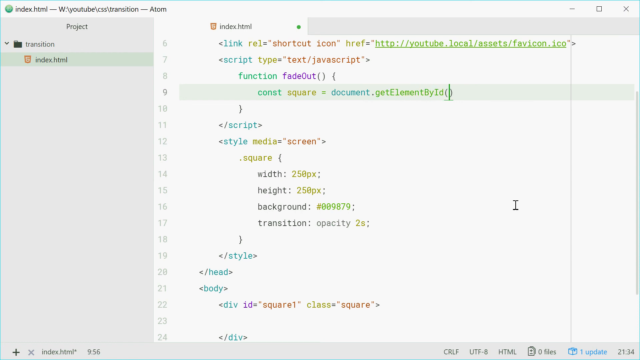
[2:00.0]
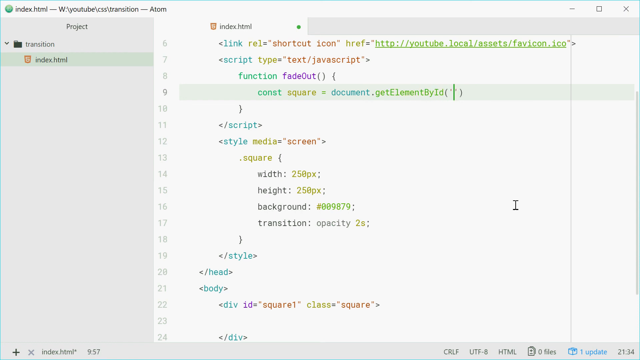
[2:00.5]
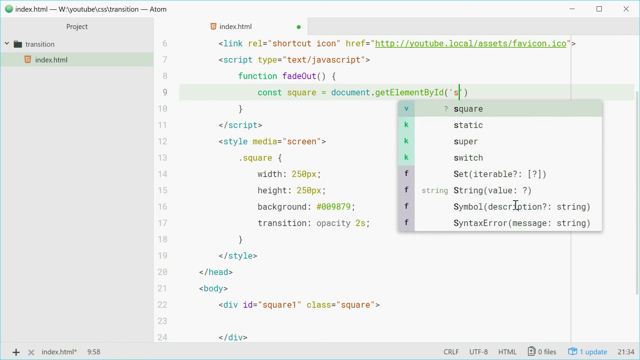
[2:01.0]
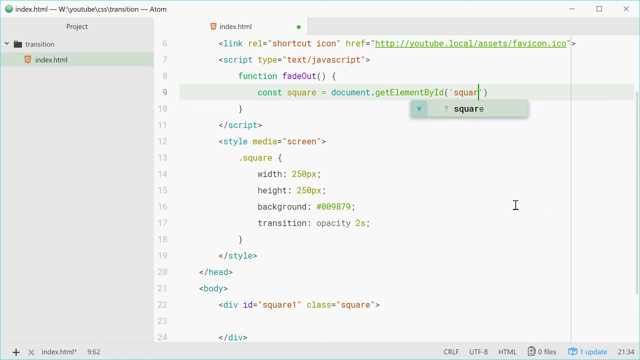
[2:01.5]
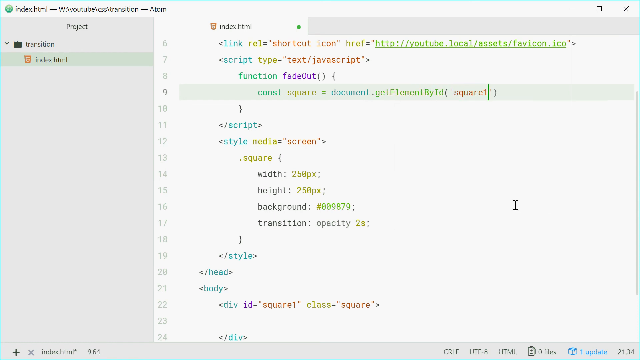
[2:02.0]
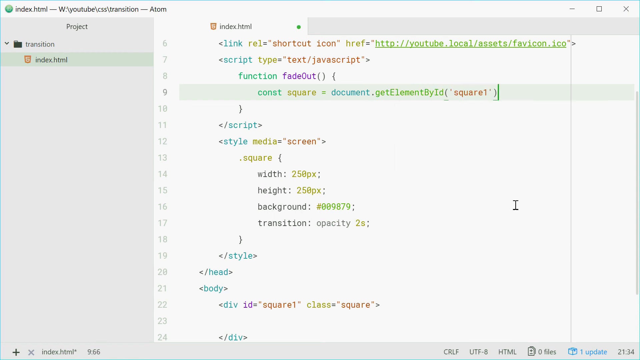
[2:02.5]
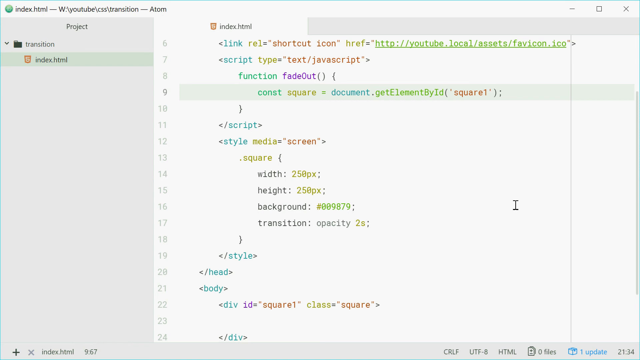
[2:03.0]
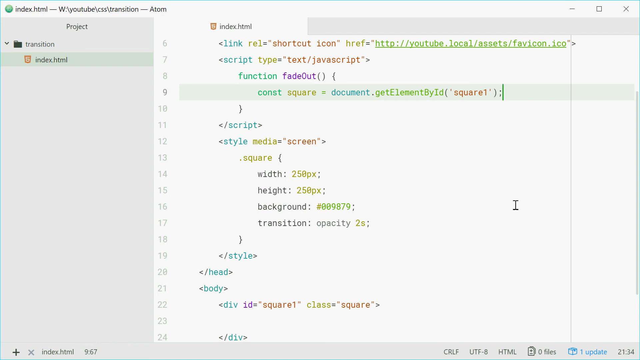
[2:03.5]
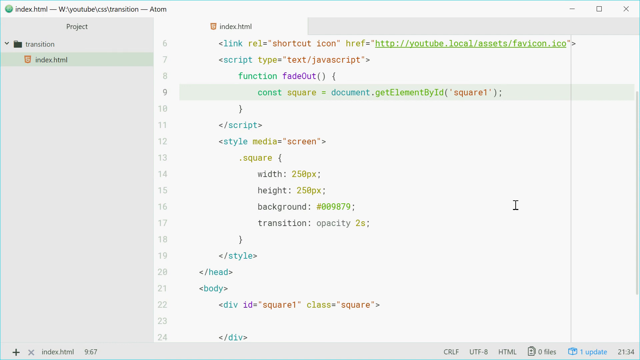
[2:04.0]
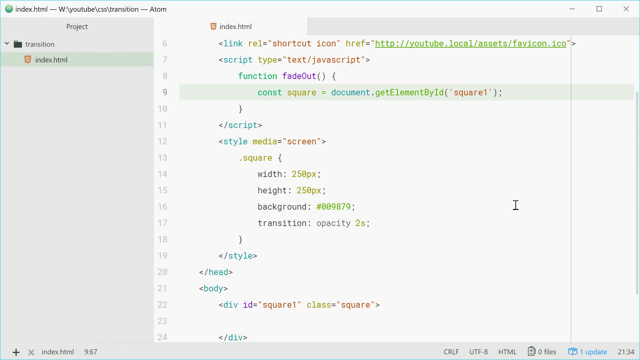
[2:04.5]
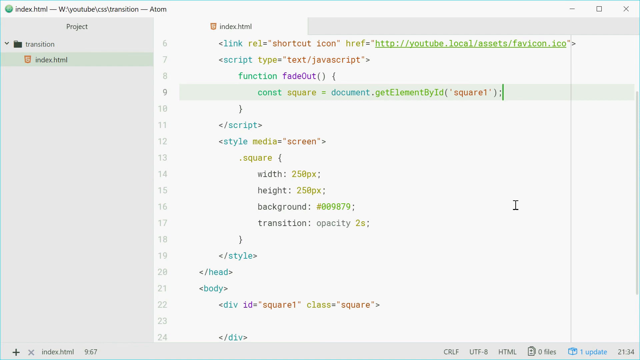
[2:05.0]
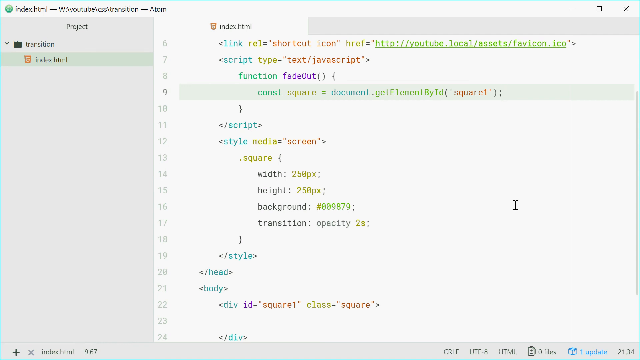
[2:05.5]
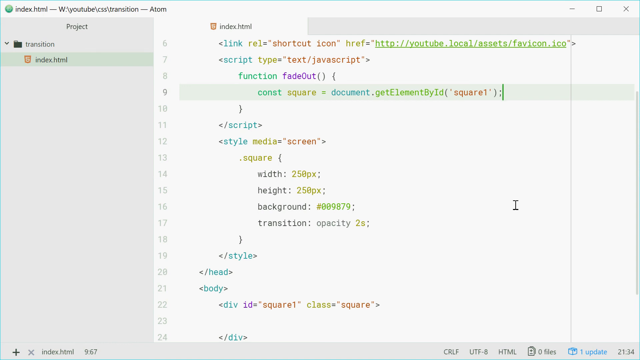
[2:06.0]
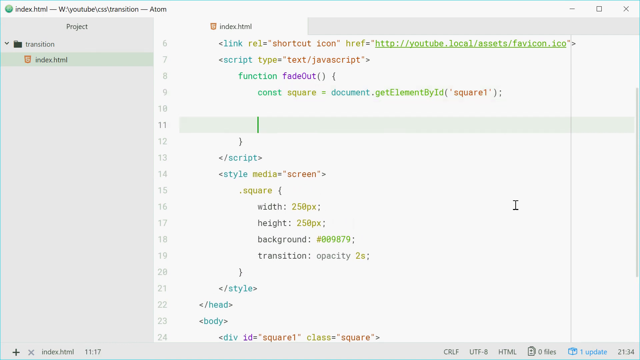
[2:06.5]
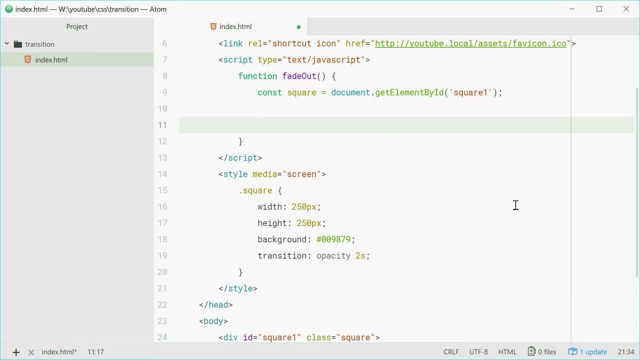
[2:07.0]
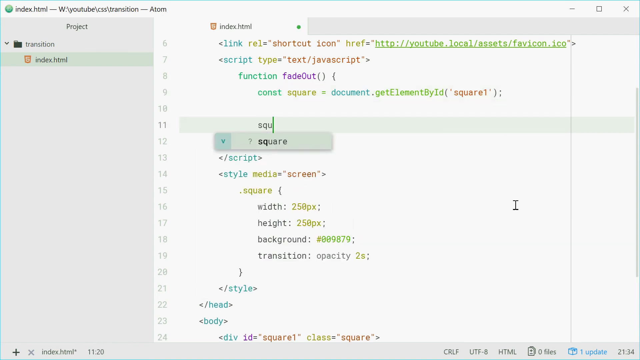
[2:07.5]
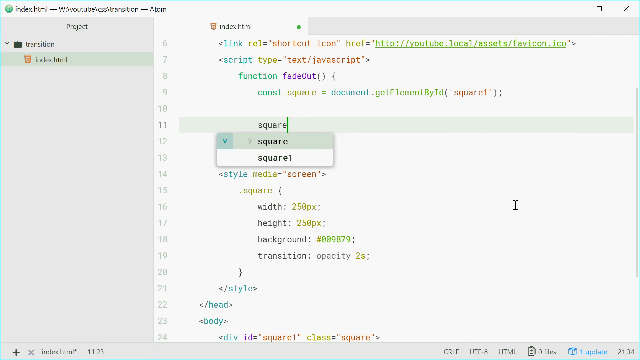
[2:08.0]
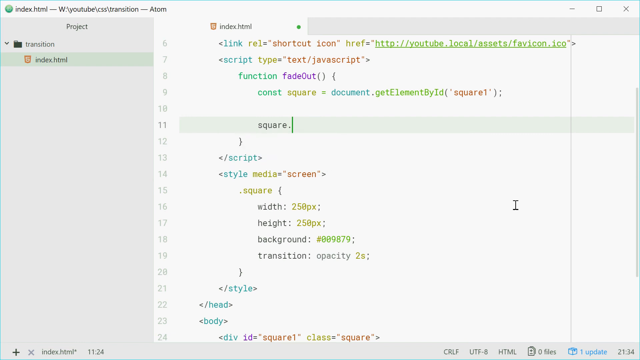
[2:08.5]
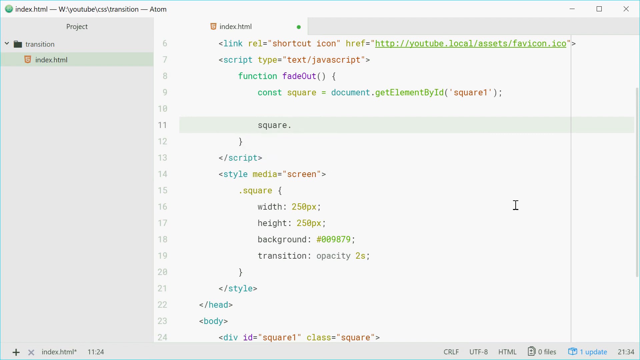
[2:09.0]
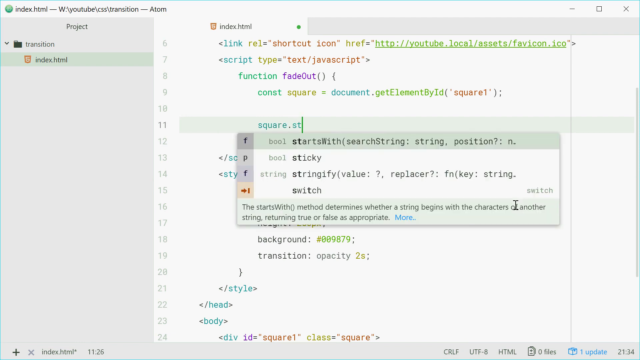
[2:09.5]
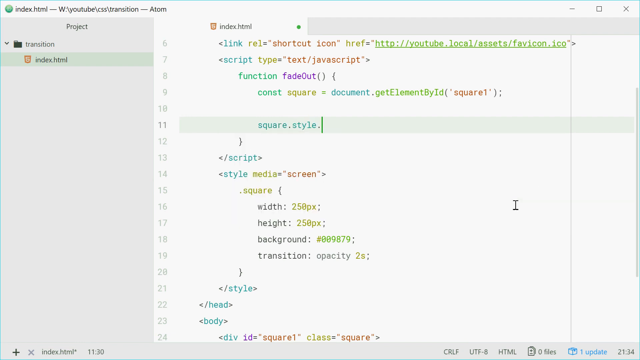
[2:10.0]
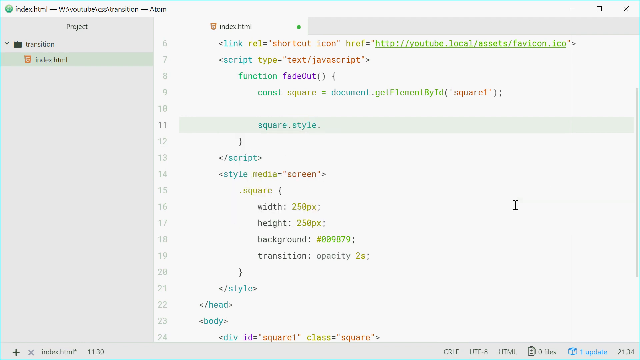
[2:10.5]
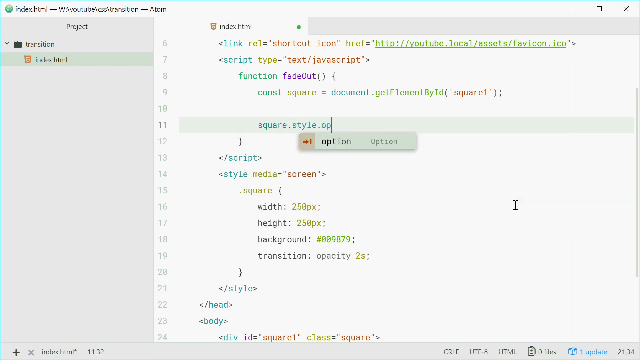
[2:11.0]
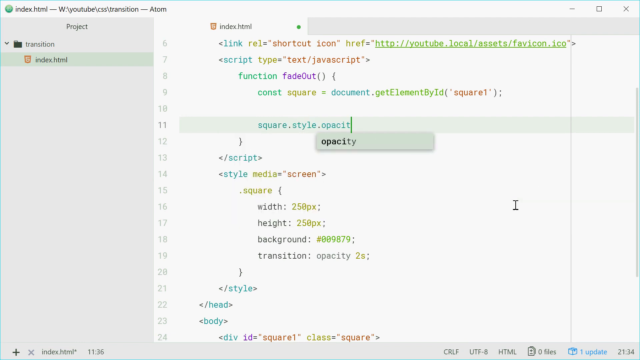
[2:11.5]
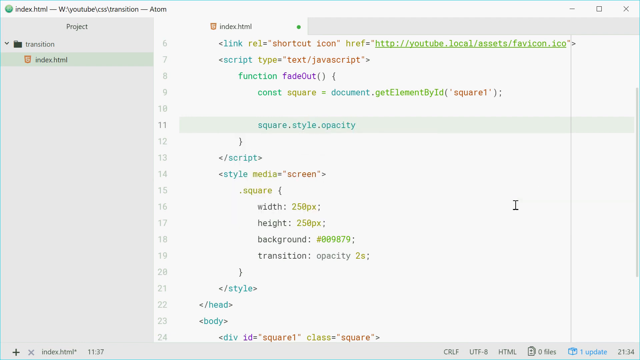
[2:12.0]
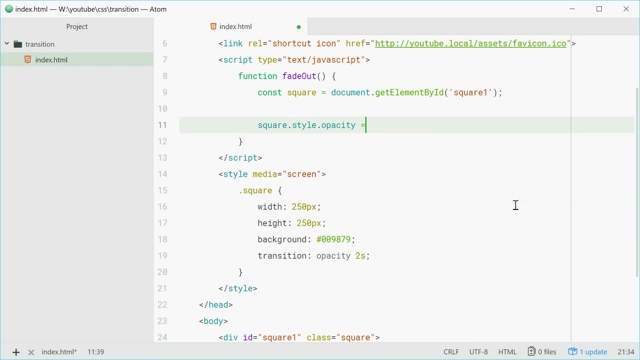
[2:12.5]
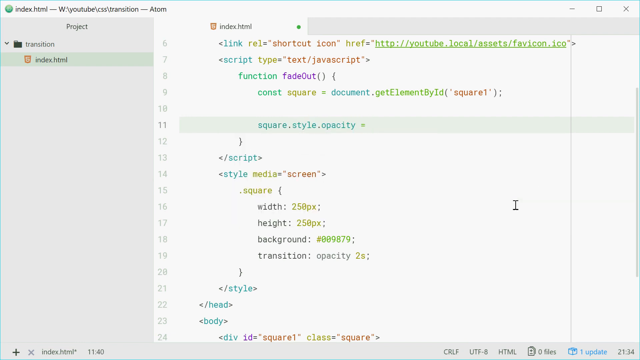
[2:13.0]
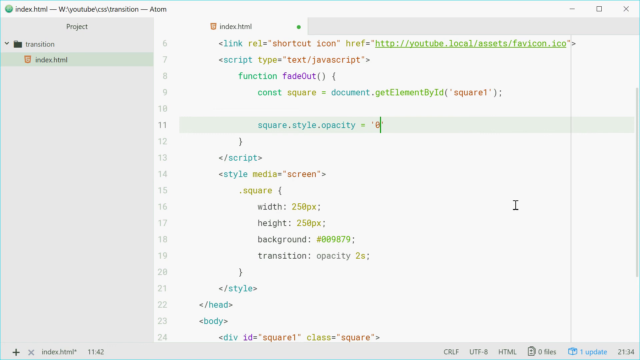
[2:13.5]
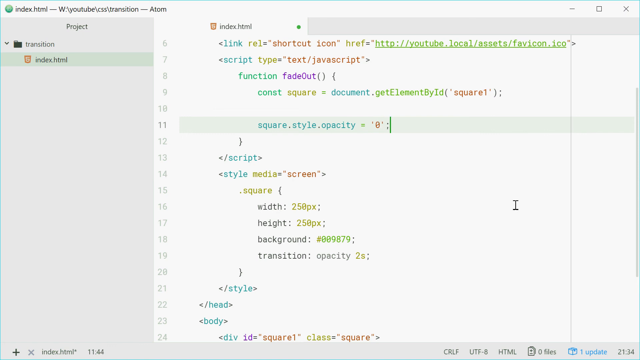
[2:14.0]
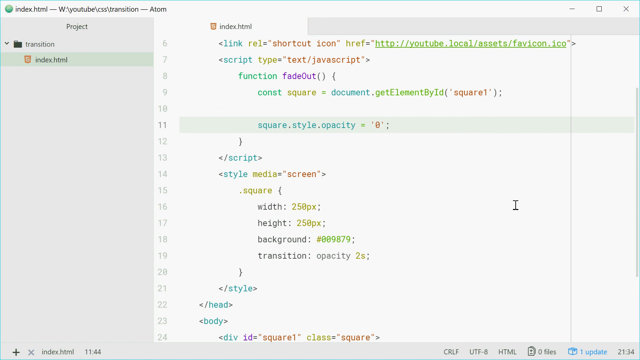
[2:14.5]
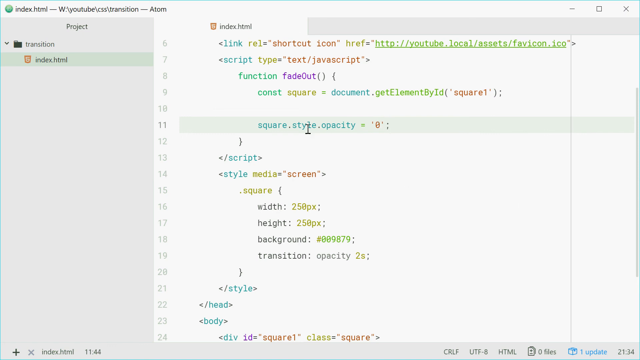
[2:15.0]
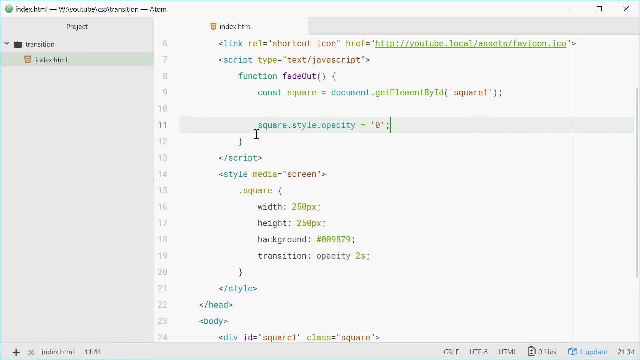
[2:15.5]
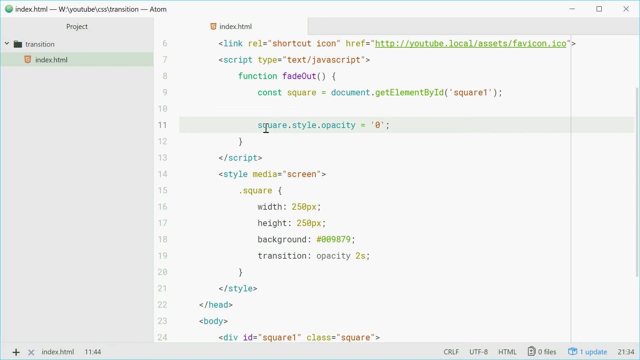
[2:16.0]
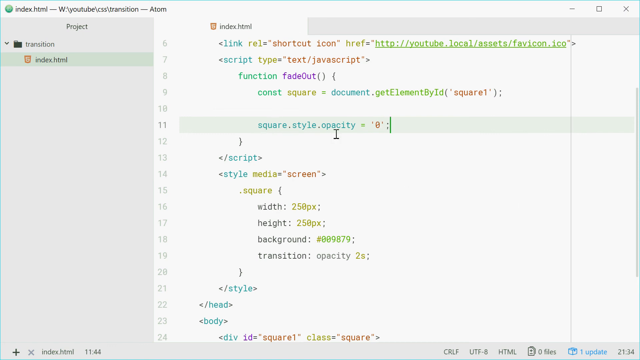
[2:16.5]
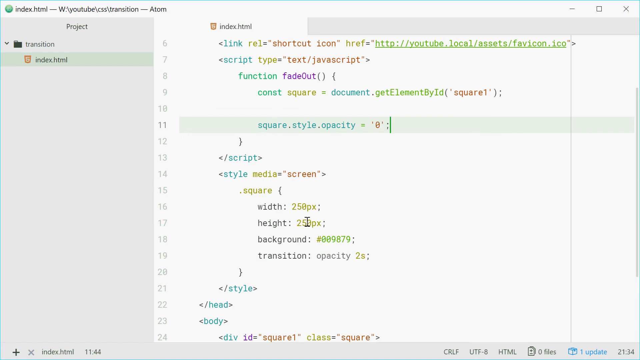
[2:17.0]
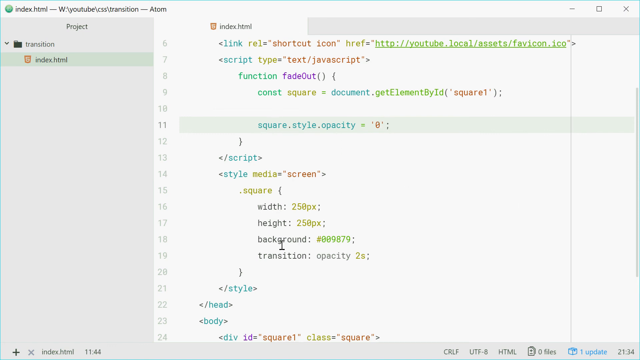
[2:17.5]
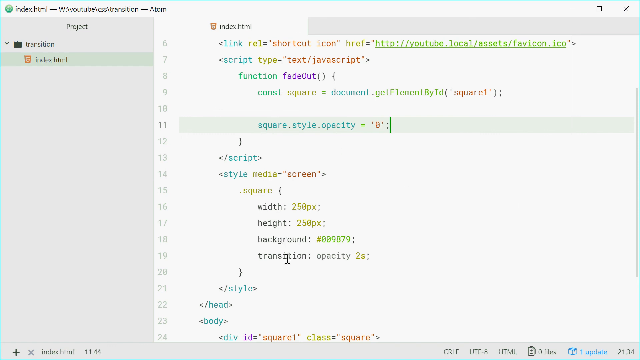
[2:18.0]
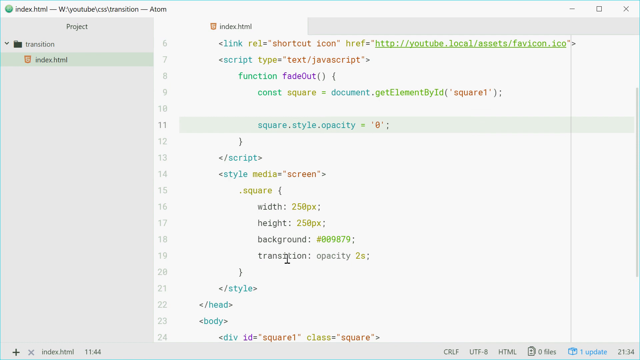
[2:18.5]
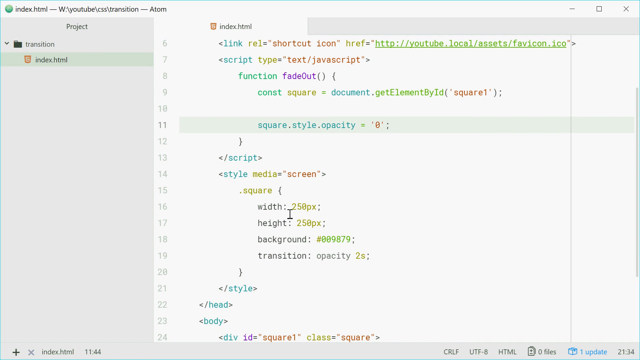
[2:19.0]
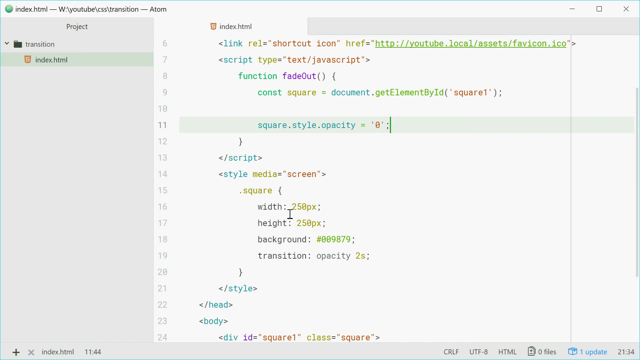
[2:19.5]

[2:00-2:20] On the same index.html page, the man continues editing the code, adding brackets with 'square1' in apostrophes and typing the word square, while options for square and square1 appear. He adds .style.opacity = '0', then scrolls down the code. Around the ninth line of the code, inside the brackets of get element by id, he adds 'square1', closes the brackets, and adds further elements such as square style opacity 0. He then scrolls down the code again before the video stops.